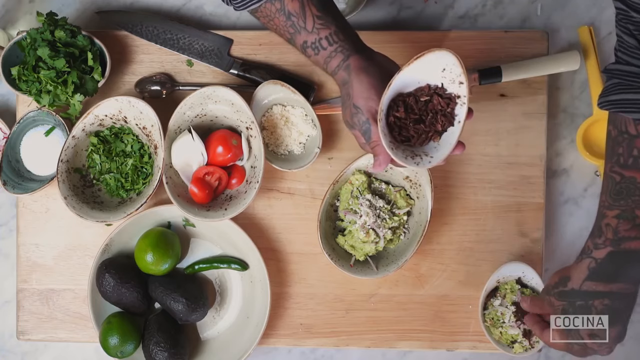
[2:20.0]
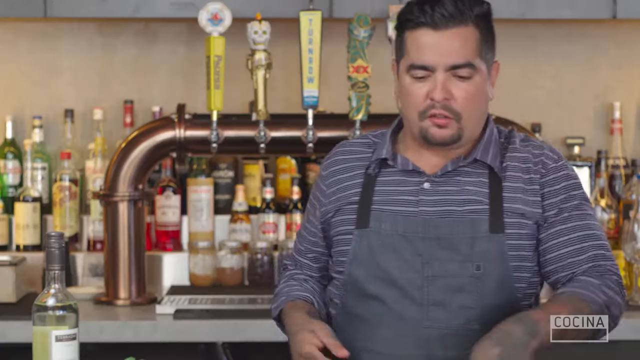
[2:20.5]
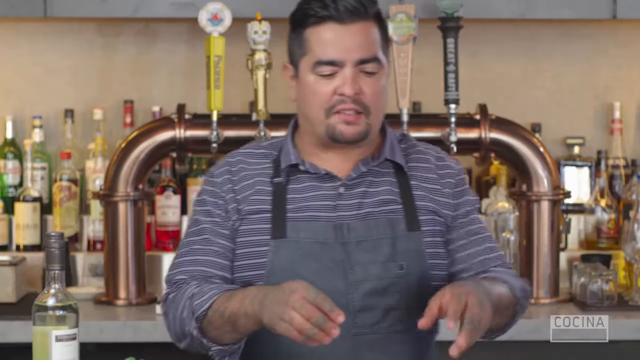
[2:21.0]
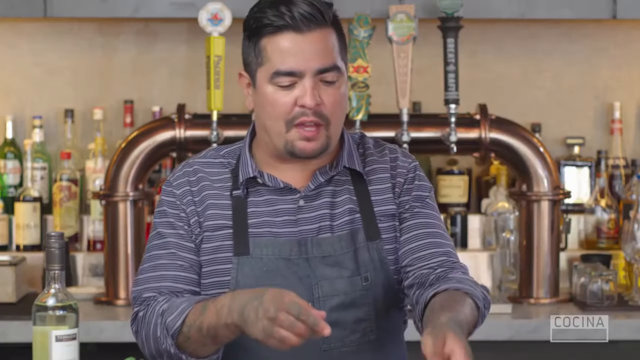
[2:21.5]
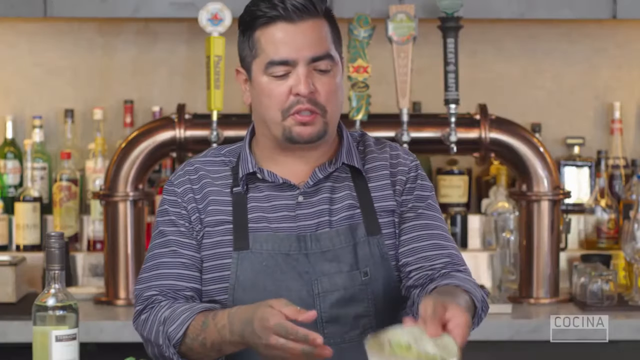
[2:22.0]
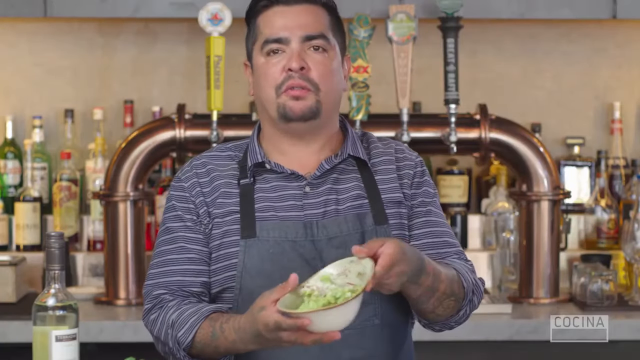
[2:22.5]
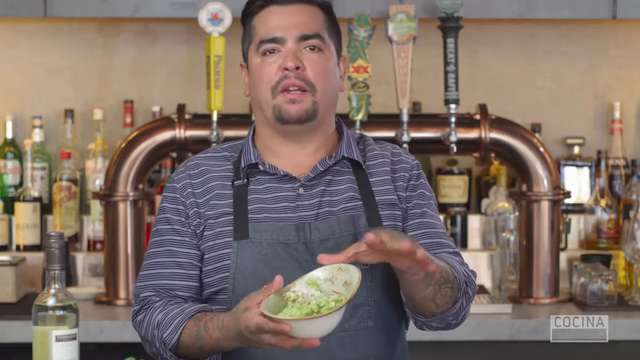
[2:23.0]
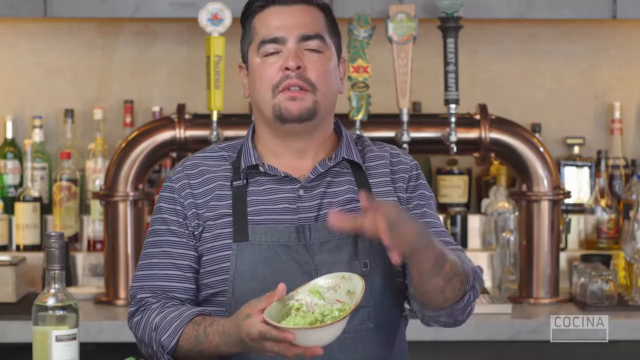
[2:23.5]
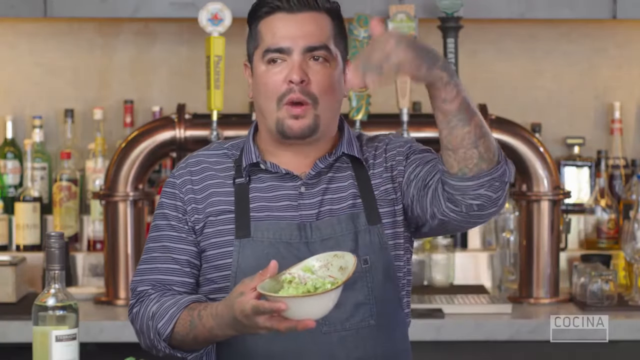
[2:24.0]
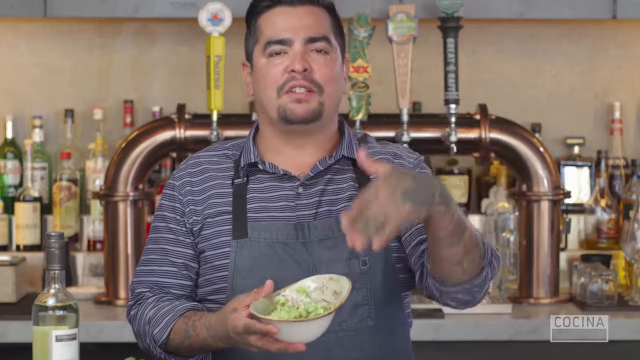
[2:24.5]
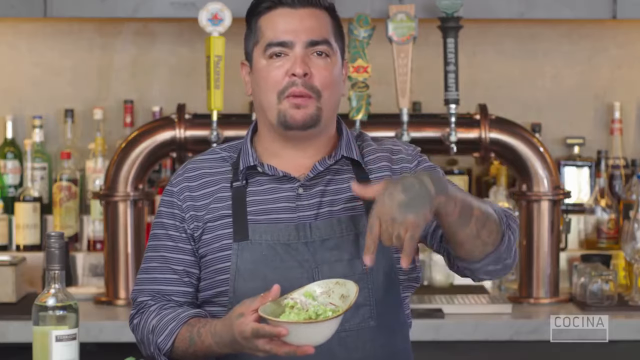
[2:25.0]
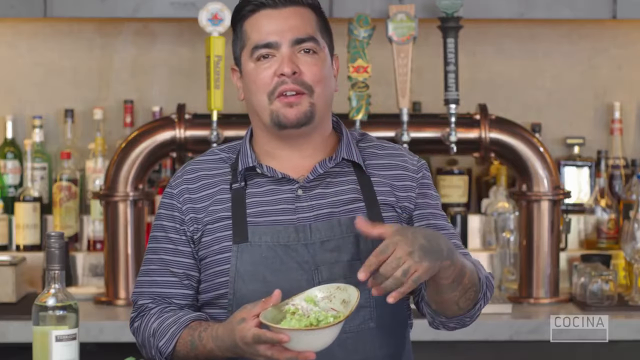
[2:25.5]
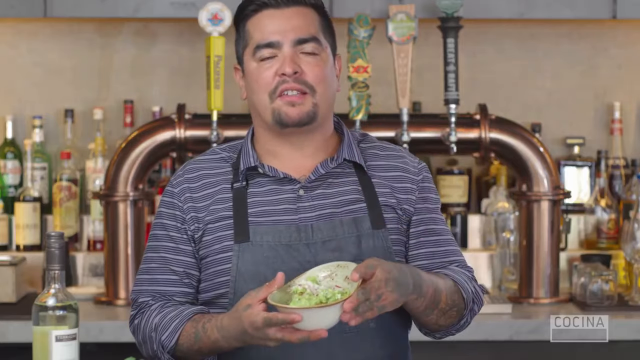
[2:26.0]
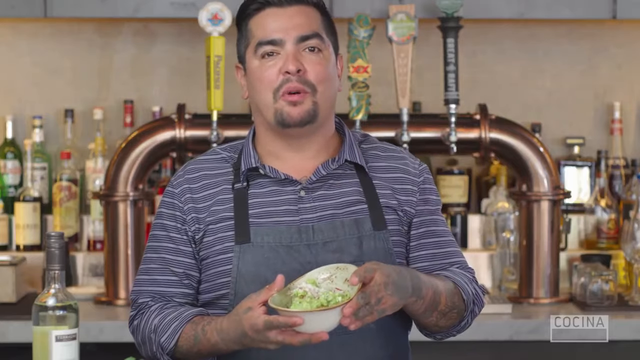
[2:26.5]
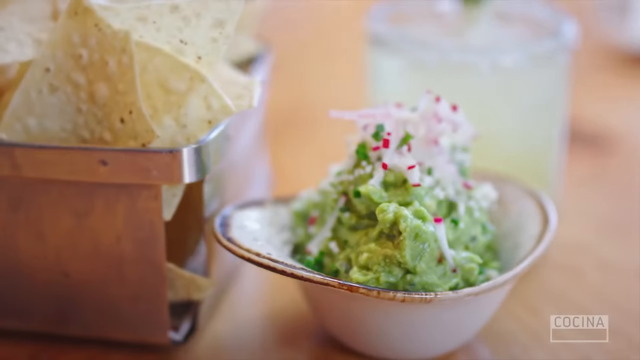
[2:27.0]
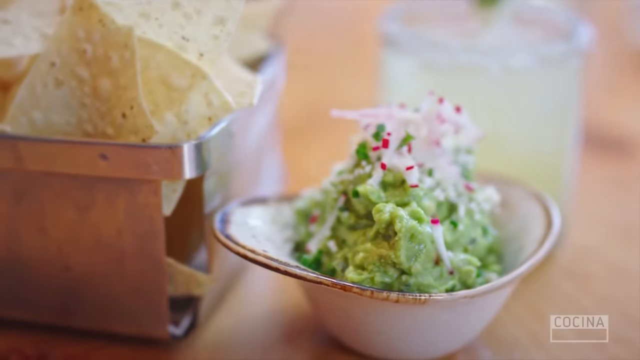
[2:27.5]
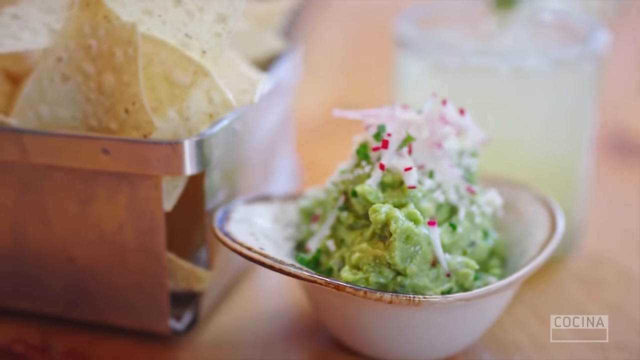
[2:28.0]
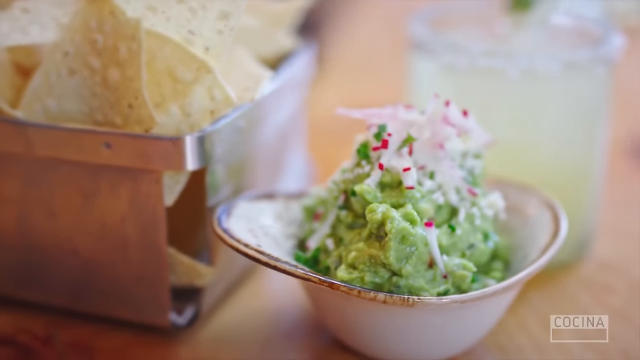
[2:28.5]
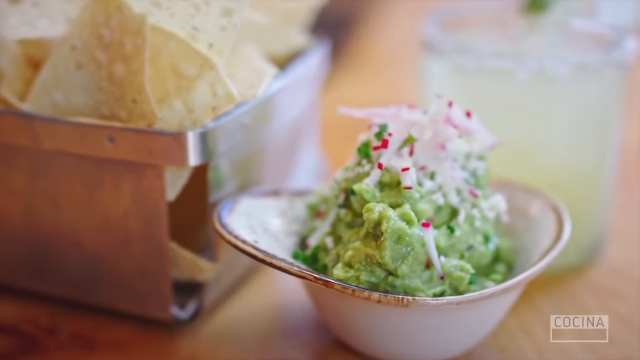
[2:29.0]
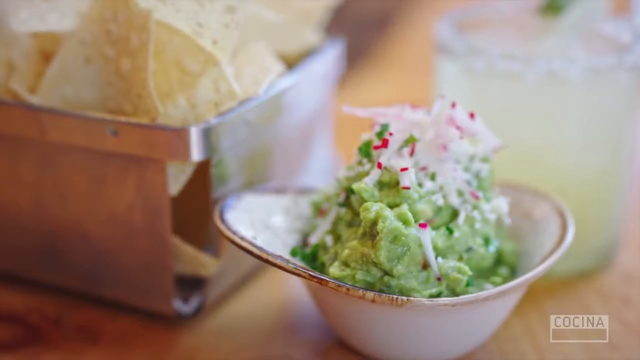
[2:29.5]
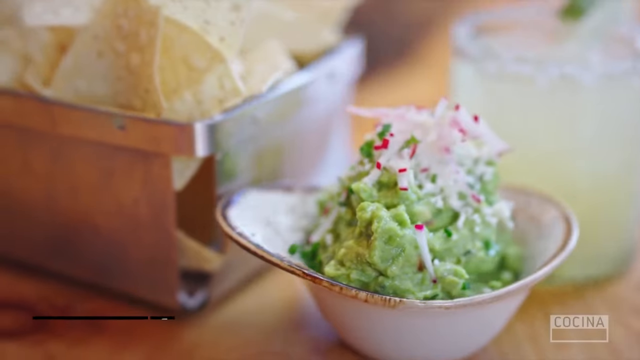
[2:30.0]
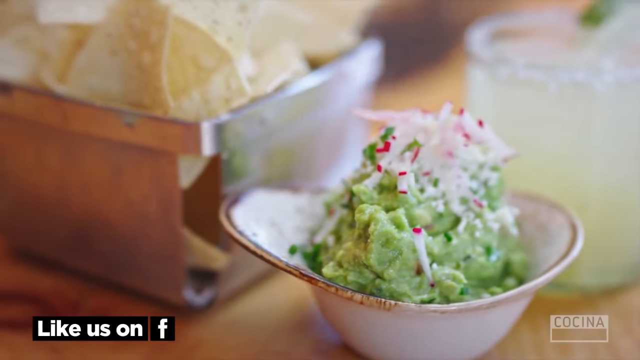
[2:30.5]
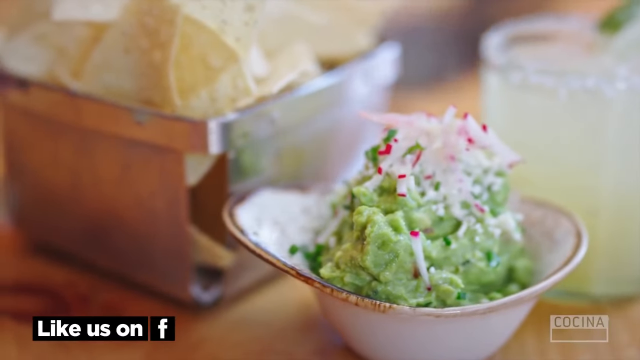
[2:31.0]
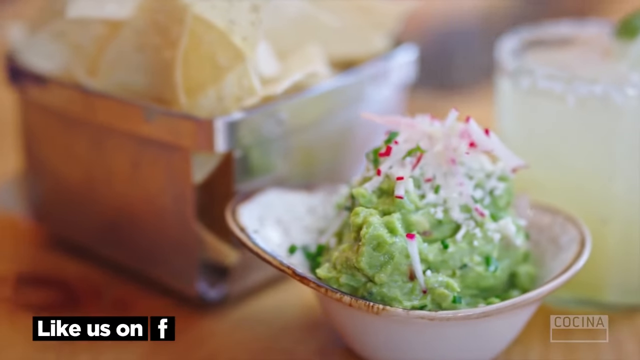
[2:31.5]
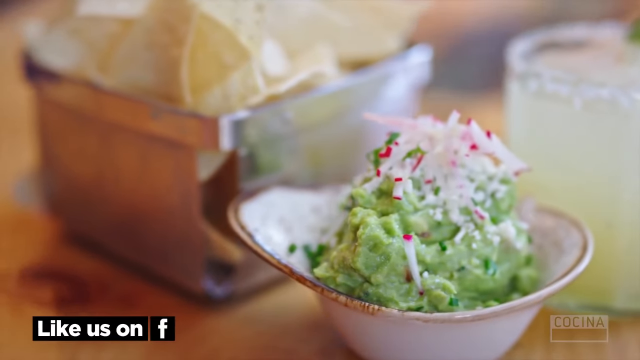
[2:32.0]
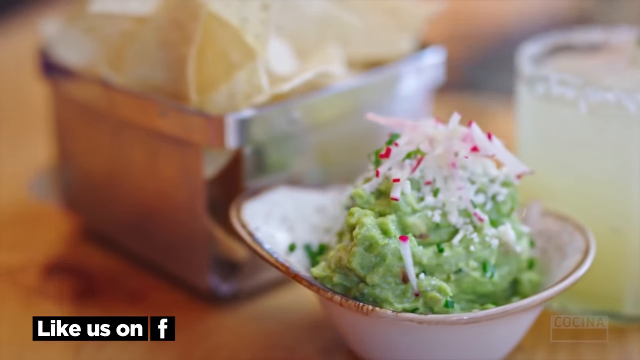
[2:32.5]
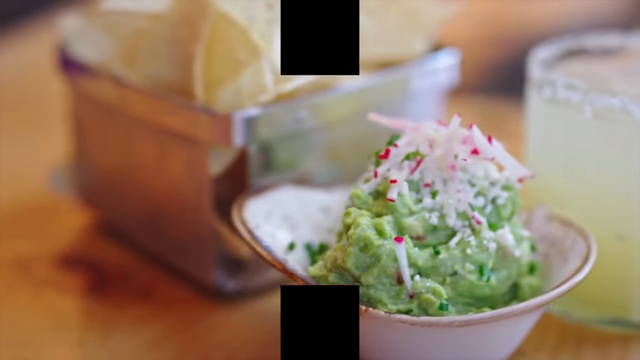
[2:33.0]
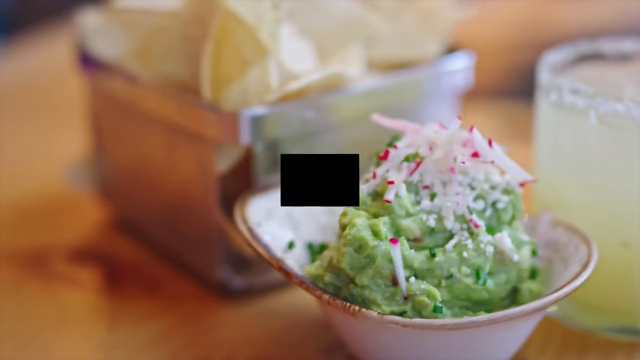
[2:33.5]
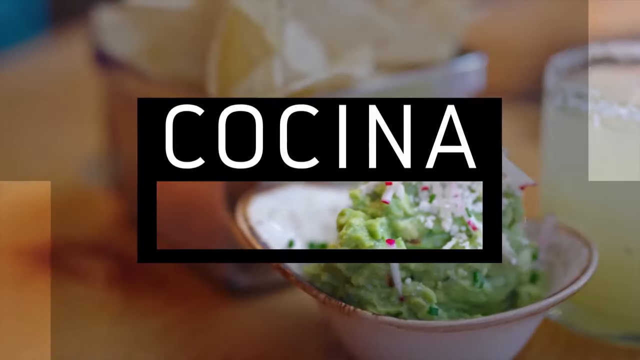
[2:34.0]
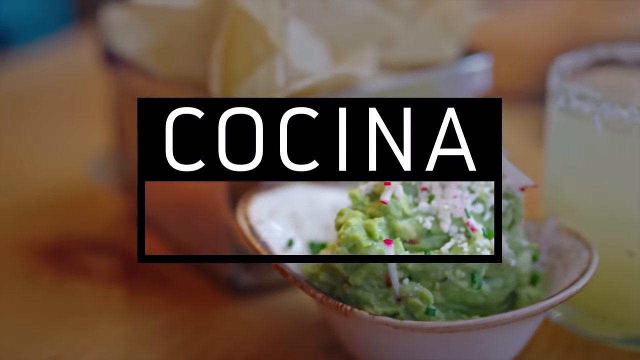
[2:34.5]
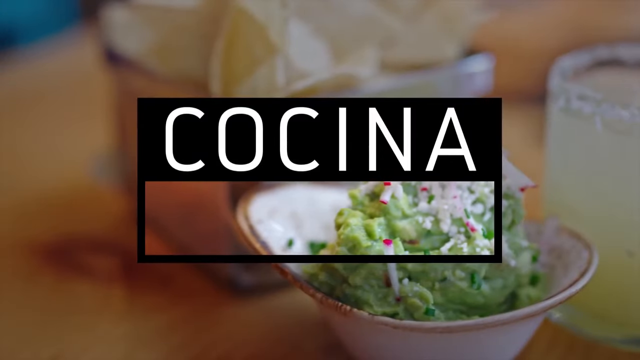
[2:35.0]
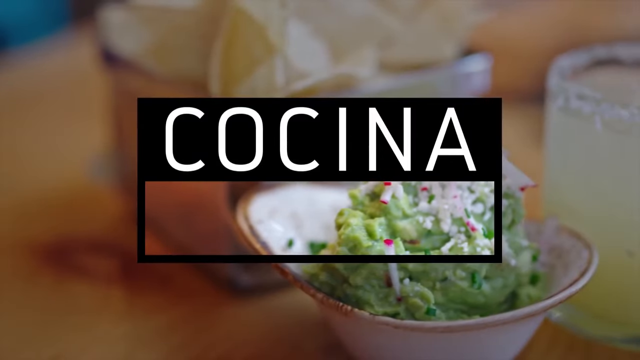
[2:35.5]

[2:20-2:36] An overhead view looks down on a hand holding what looks like a little bowl full of brown stuff. At the bottom left and bottom right are what look like little bowls of guacamole, and a left hand comes from the top right down to the bottom right, sprinkling some of the brown stuff into one. On the left side are more ingredients: white powder, coriander, what look like tomatoes, onions, more white powder, avocados, a lime and a green chili. The view changes to a man who looks Mexican and in his 30s, wearing a blue shirt with white stripes and a blue apron, with his sleeves rolled up to his elbows and tattoos all over his forearms. Behind him is a wall of what look like liquor bottles. Talking, he picks up the white bowl with the guacamole and keeps talking. The perspective changes to a rotating B-roll shot of the green guacamole with white radish on top and tortilla chips in the background. A black rectangle appears in the middle reading "Cocina" in white. Throughout the video, a watermark at the bottom right reads "Cocina".